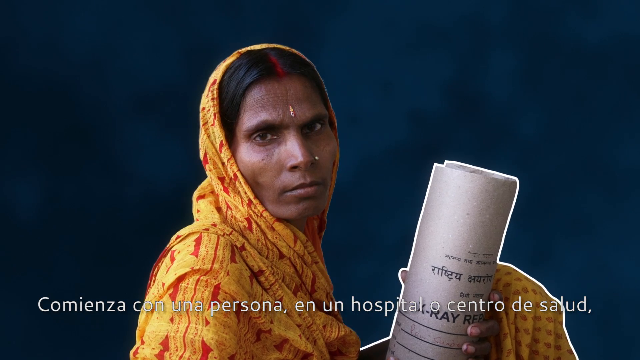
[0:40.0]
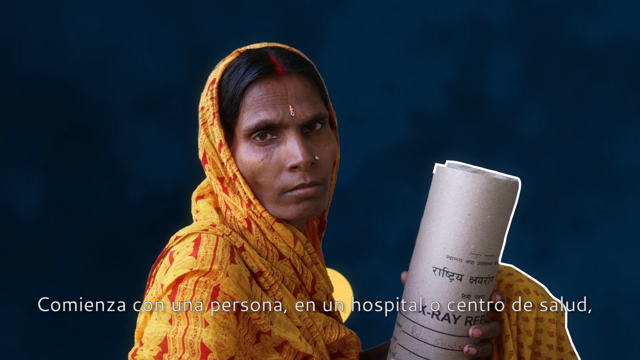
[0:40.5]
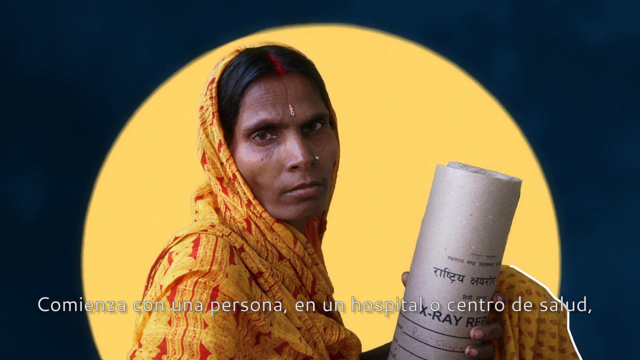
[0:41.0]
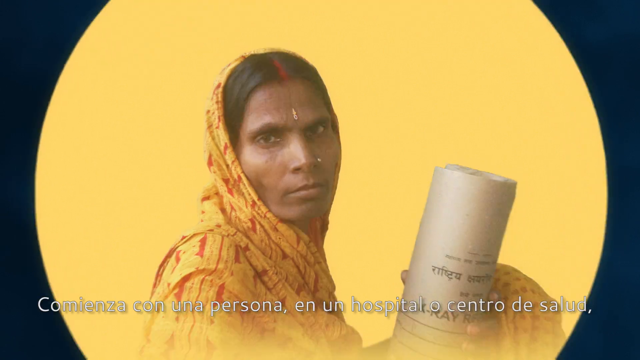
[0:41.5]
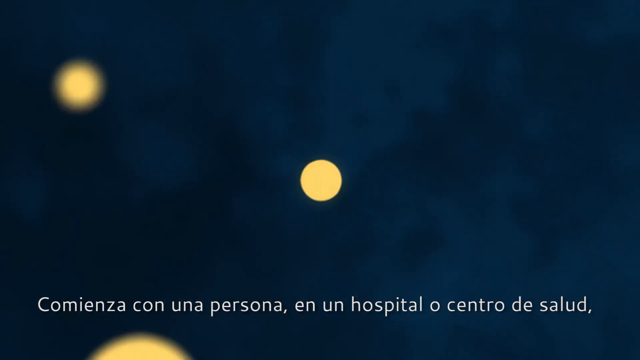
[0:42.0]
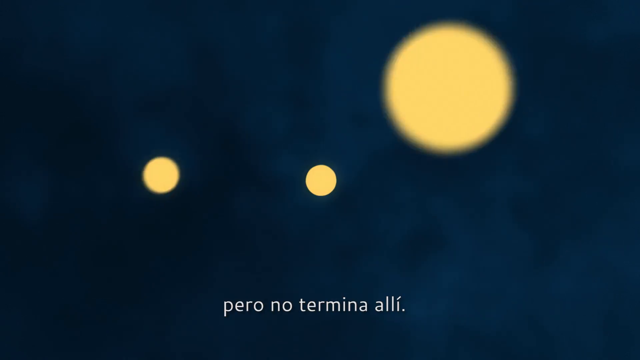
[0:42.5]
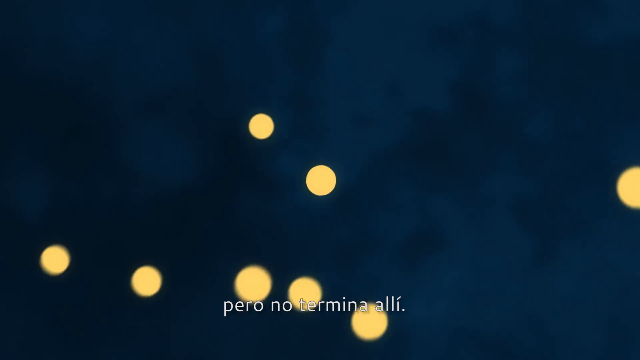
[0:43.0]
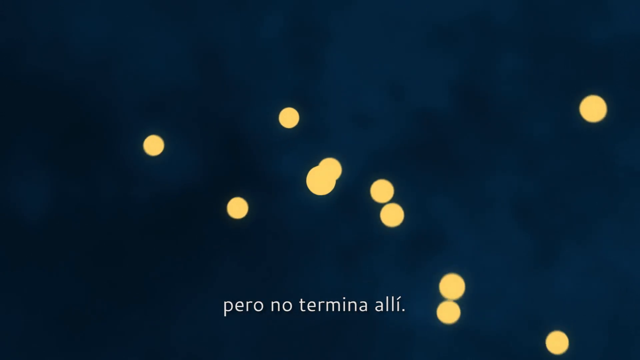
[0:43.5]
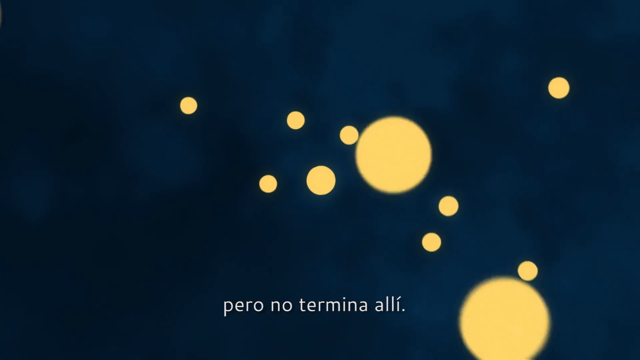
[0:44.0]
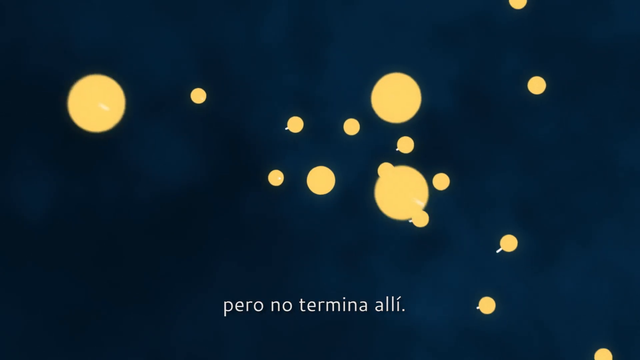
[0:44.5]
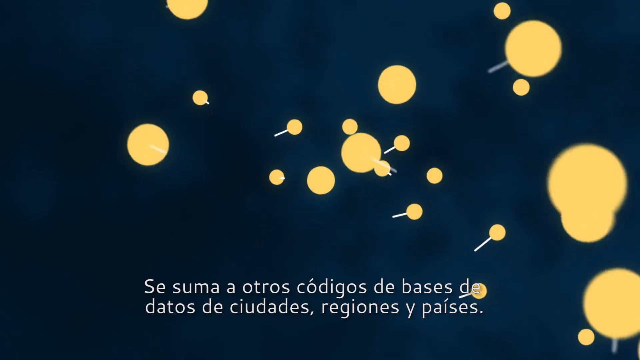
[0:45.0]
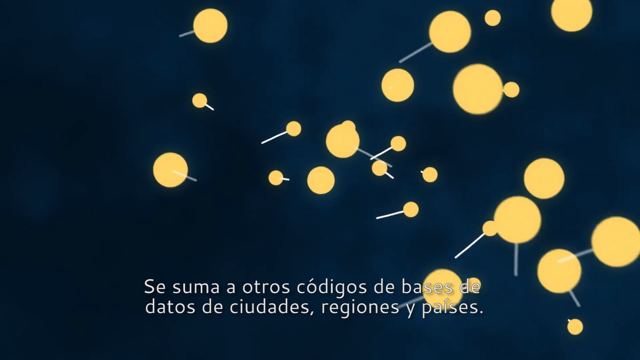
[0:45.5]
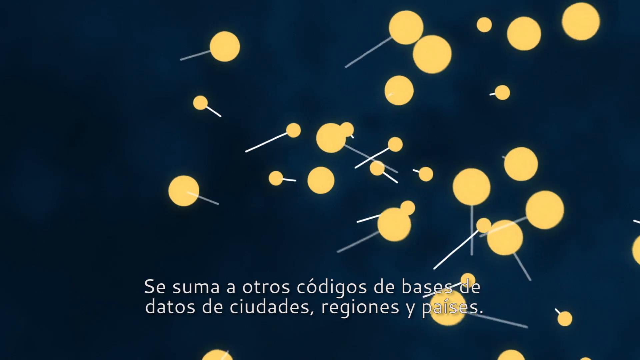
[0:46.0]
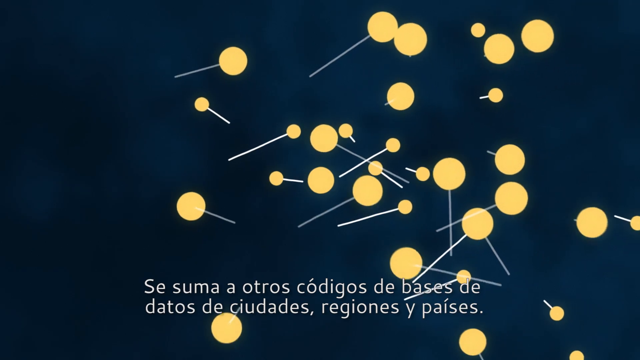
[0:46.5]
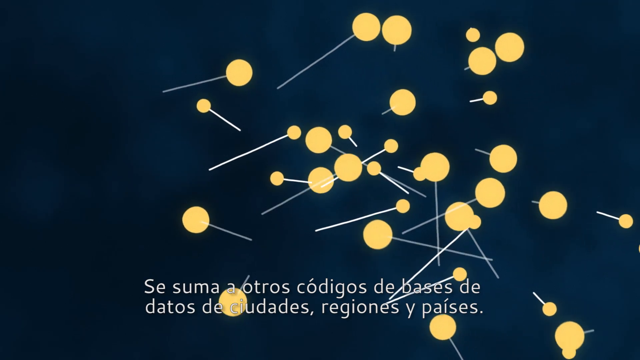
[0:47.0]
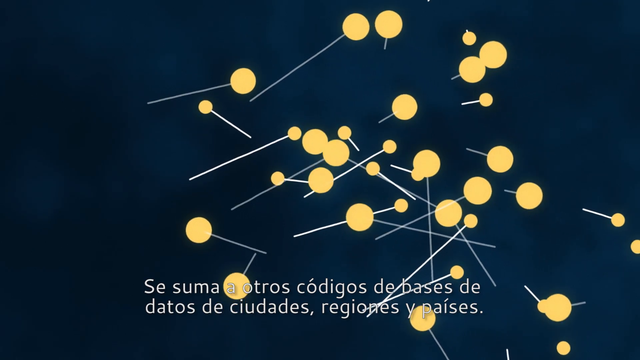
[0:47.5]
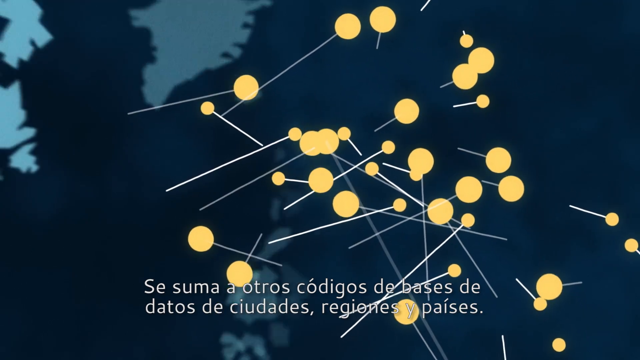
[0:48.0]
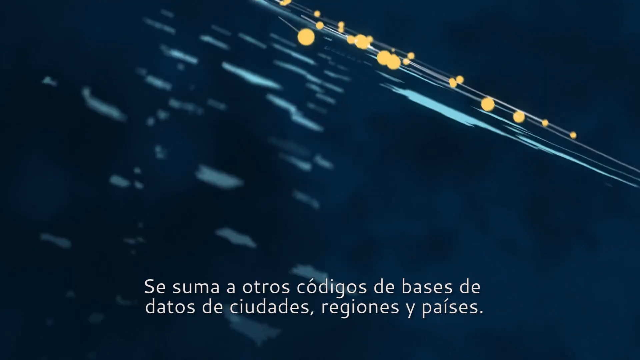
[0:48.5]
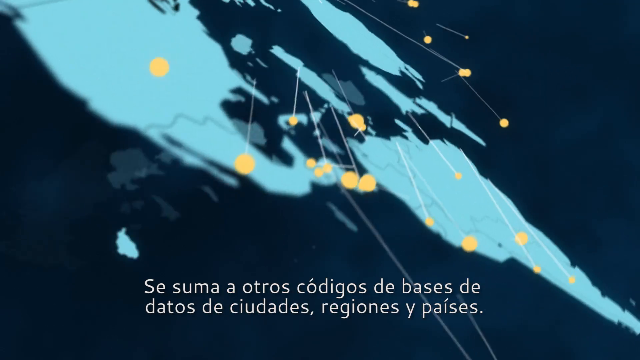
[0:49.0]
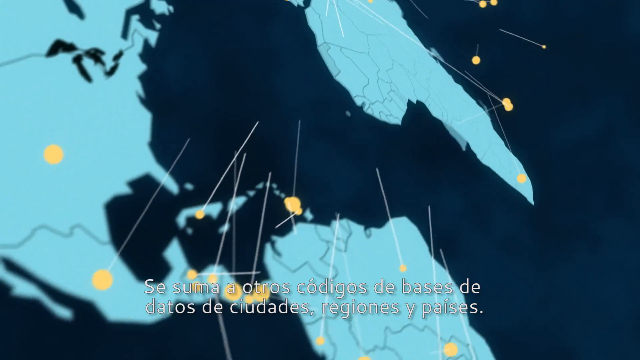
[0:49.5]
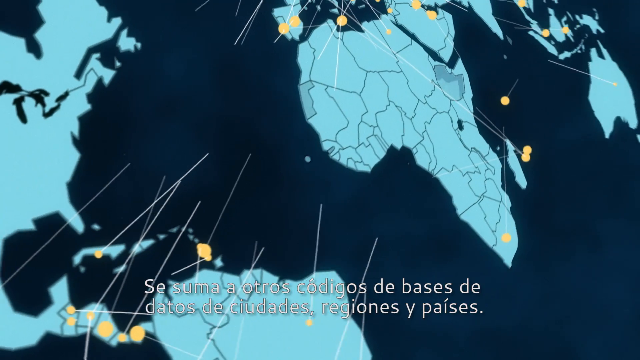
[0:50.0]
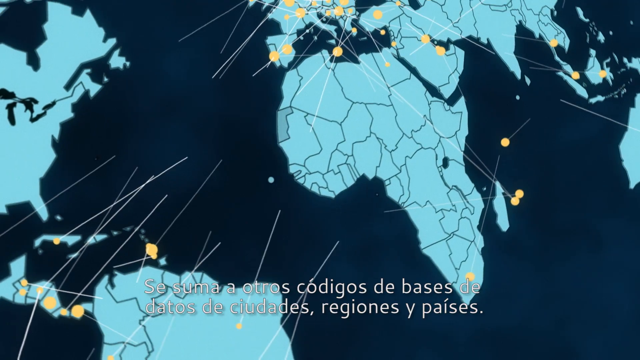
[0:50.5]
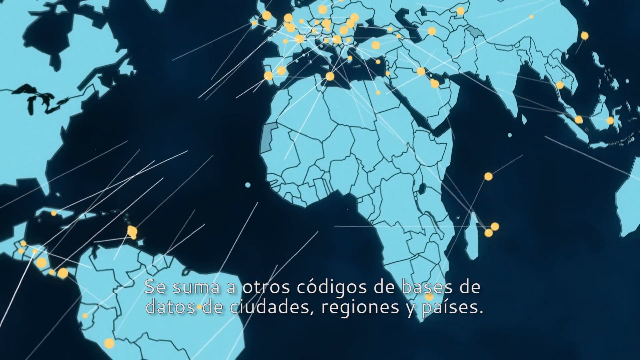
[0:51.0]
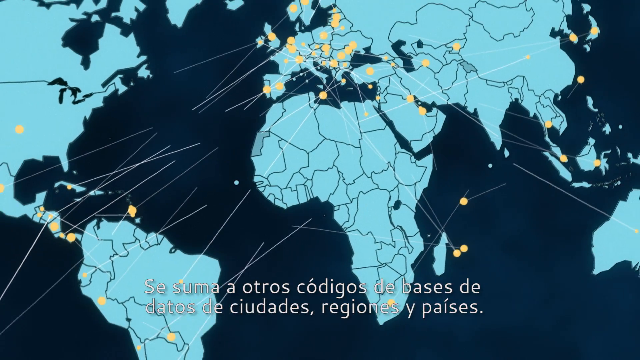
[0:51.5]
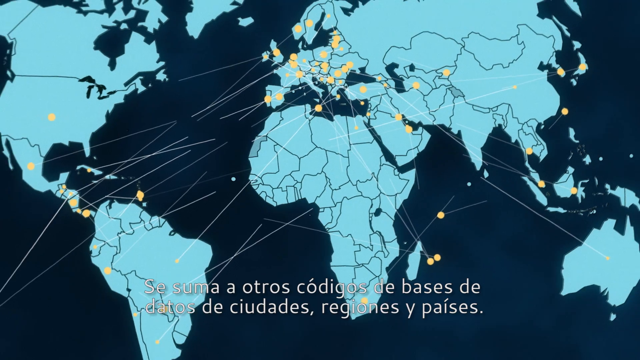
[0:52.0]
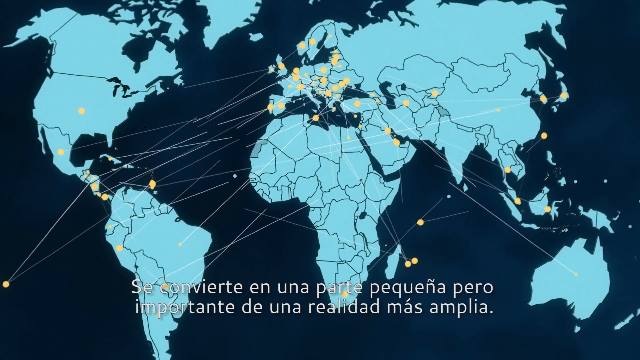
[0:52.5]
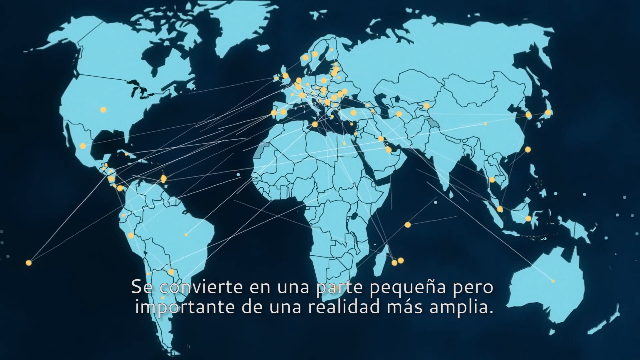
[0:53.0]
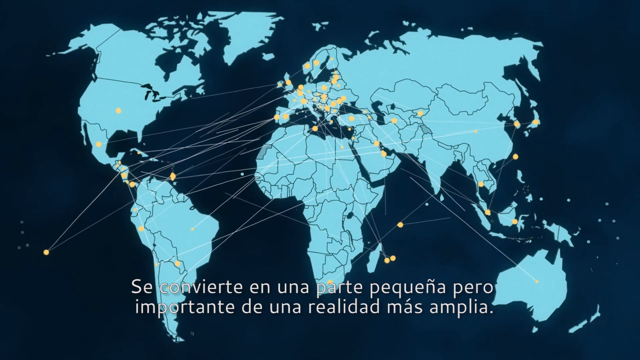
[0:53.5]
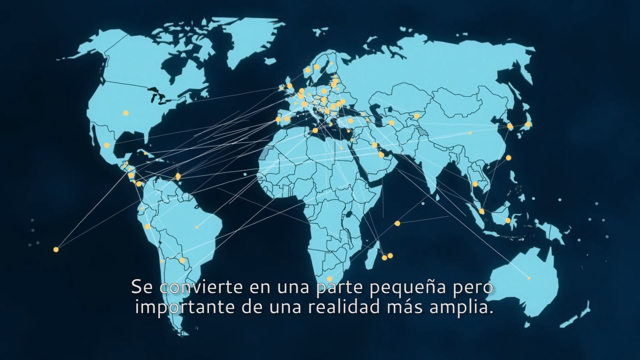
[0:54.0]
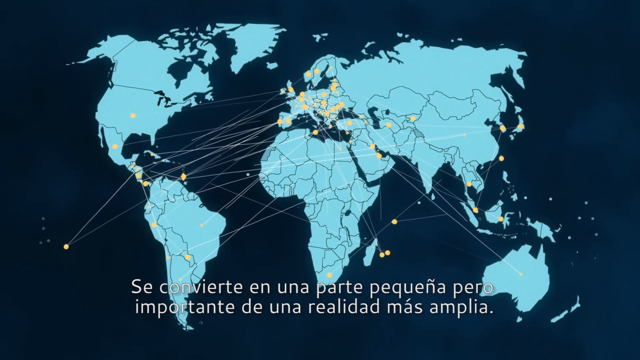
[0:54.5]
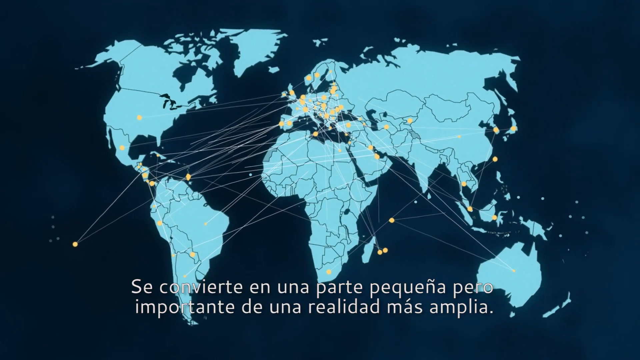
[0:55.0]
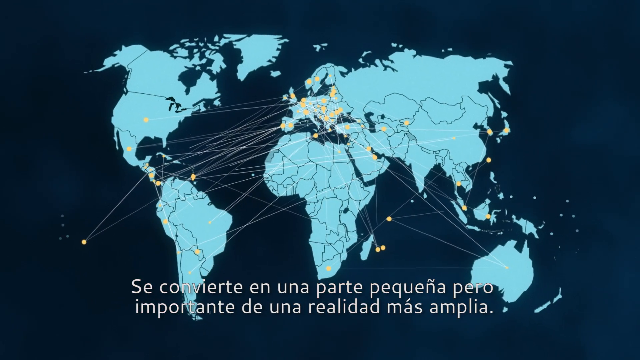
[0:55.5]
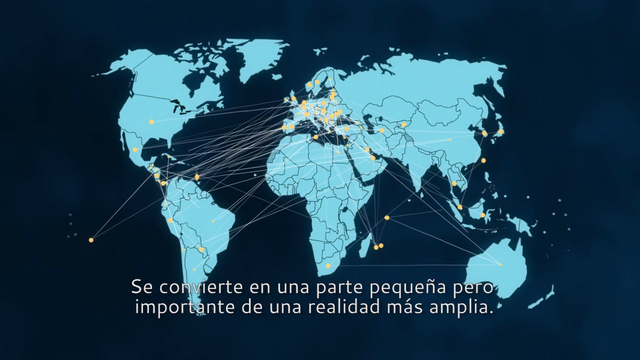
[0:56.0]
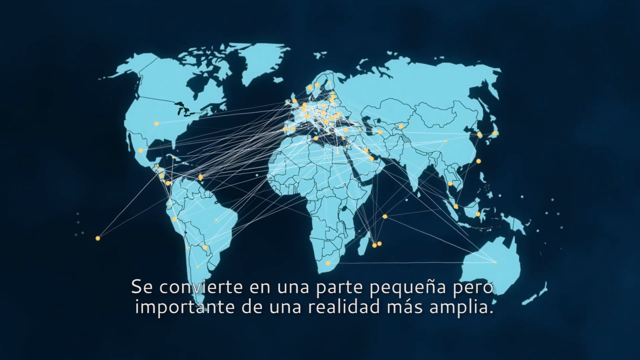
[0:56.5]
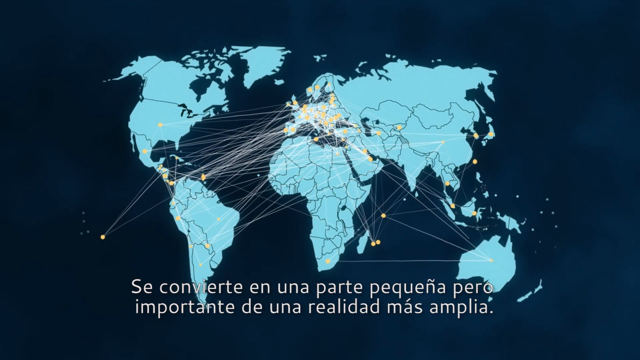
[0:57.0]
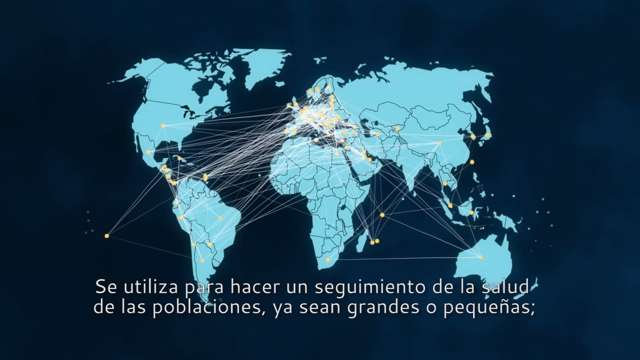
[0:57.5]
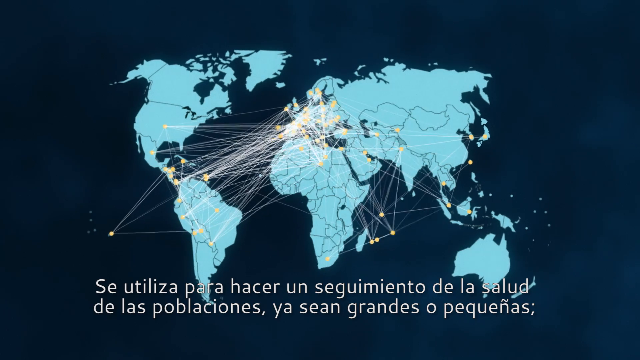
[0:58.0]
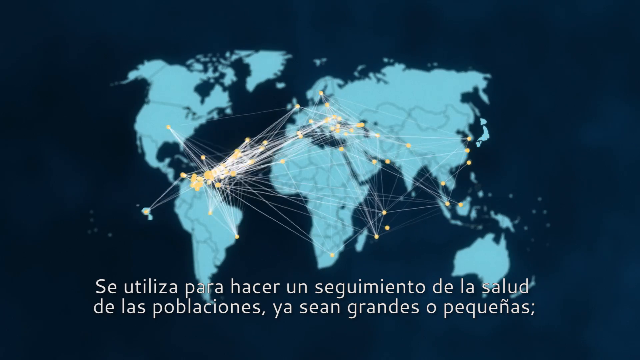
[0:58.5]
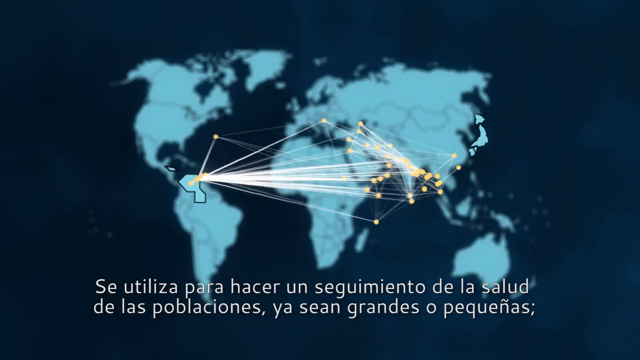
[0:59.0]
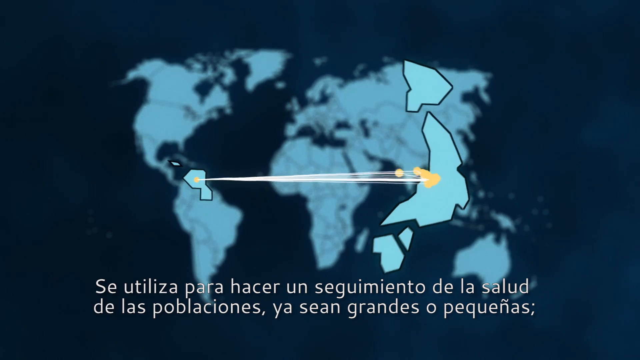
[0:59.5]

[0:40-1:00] A woman in a yellow headscarf, turned somewhat to the side, looks straight at the camera and appears to be carrying a scroll in her hand. A yellow dot appears behind her and grows larger and larger until it looks somewhat as if she is sat in front of the sun. The image of her zooms away, leaving lots of yellow circles bouncing about the screen, with thin lines growing out of some of them. The background starts to spin, revealing a world map, and the yellow dots place themselves on the map almost like pins. The lines protruding from the dots start to connect, forming something like a web drawn across the world map graphic.